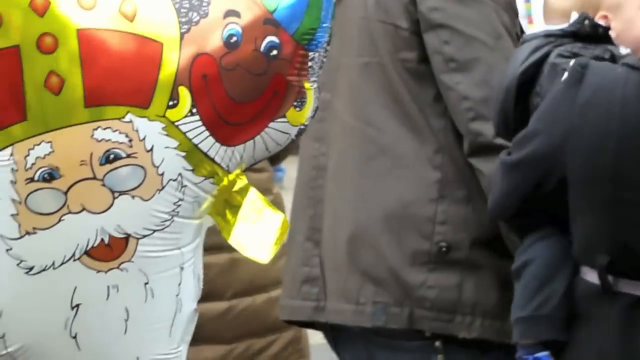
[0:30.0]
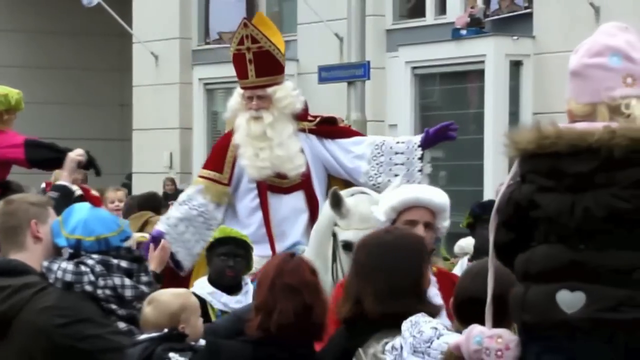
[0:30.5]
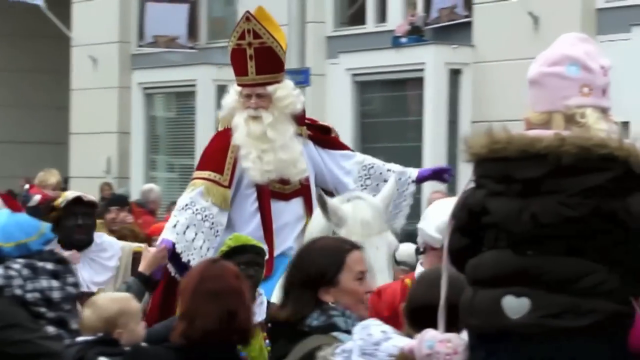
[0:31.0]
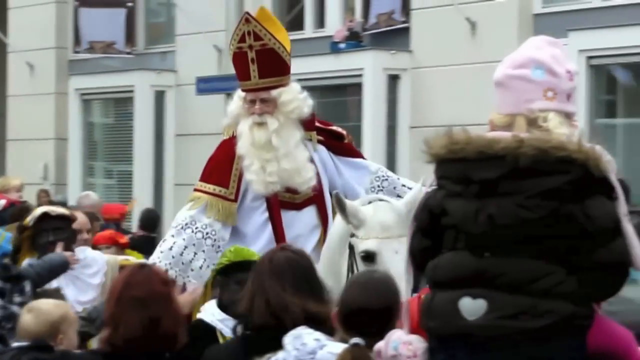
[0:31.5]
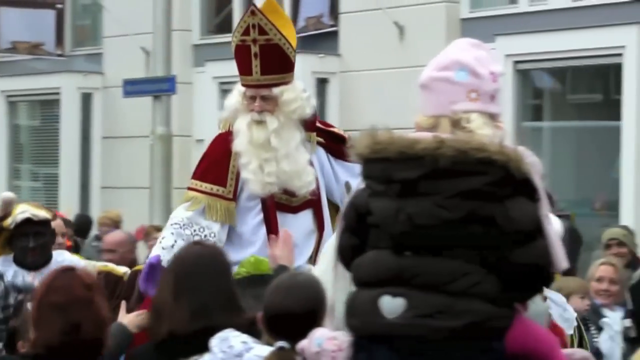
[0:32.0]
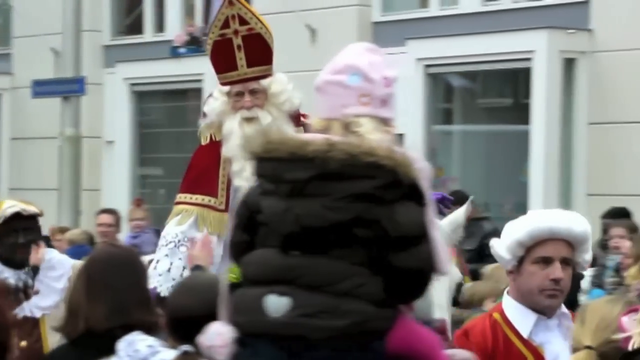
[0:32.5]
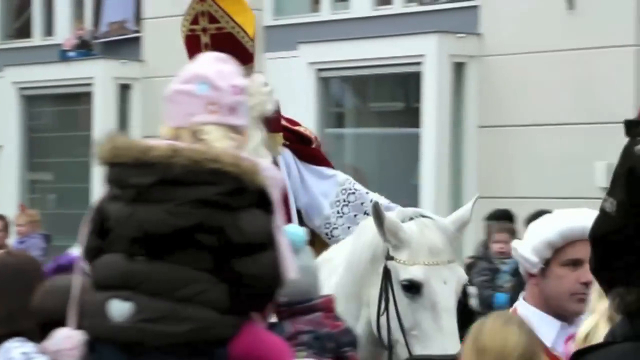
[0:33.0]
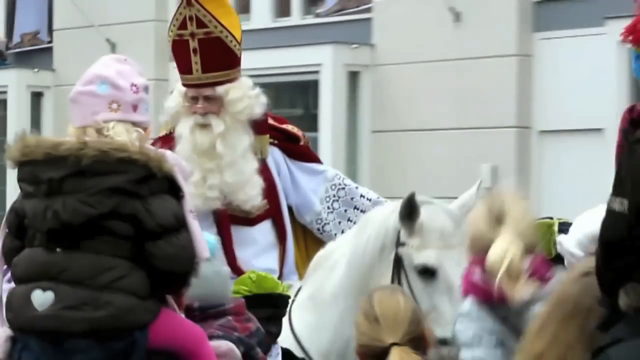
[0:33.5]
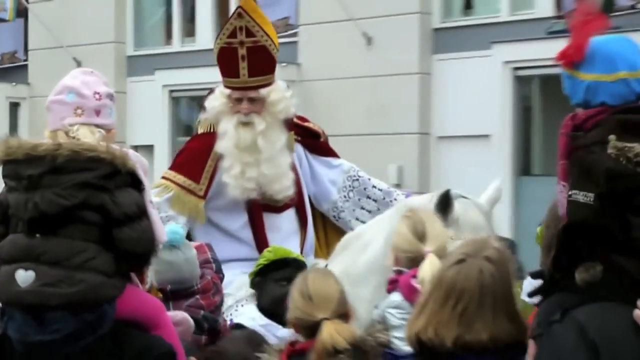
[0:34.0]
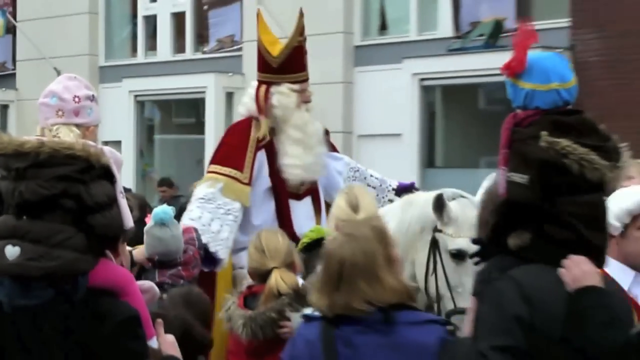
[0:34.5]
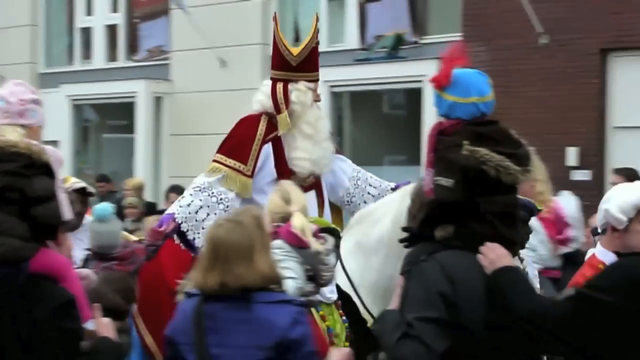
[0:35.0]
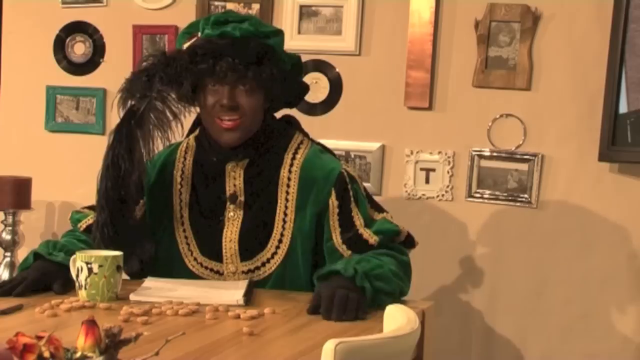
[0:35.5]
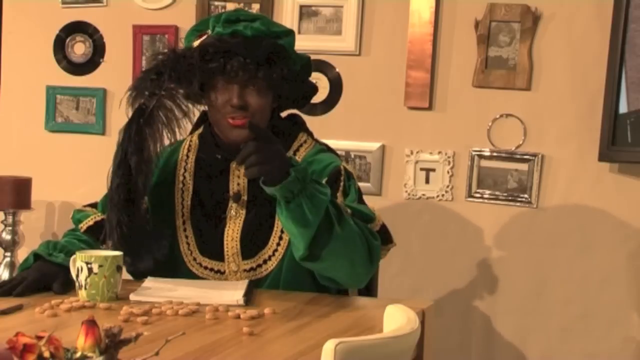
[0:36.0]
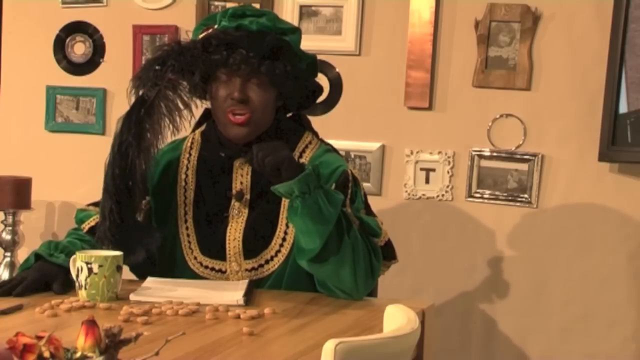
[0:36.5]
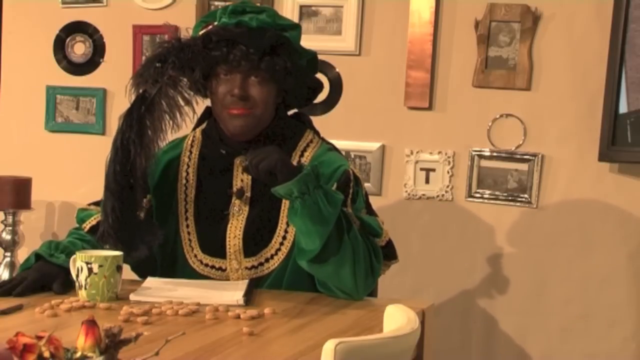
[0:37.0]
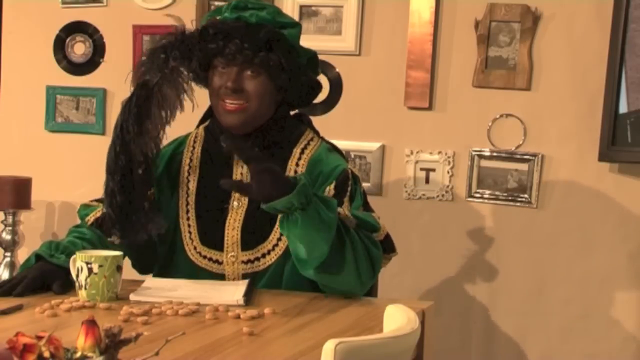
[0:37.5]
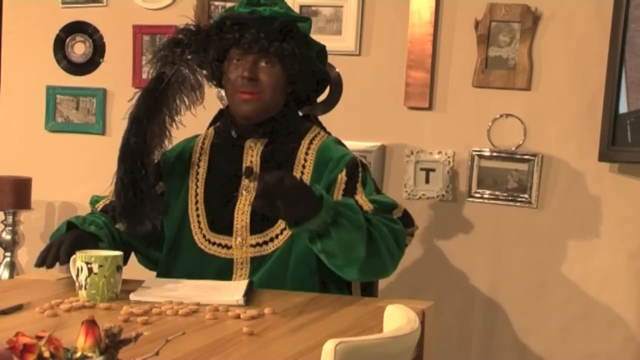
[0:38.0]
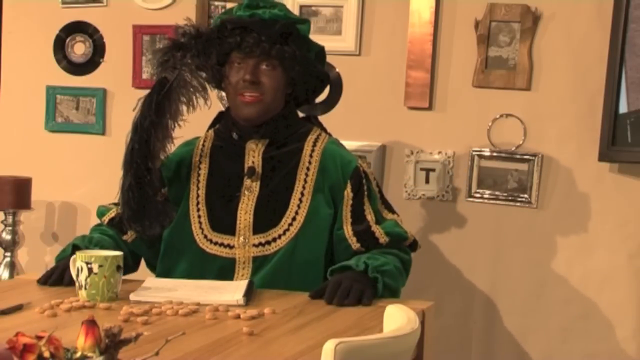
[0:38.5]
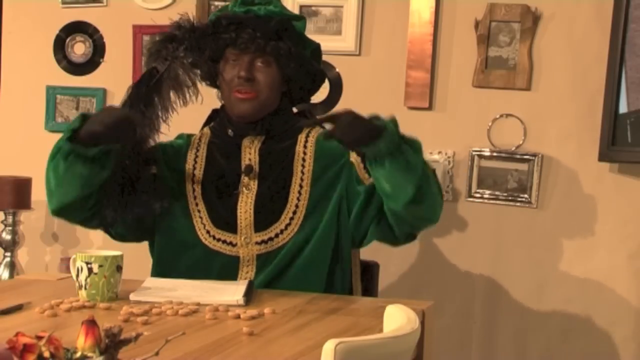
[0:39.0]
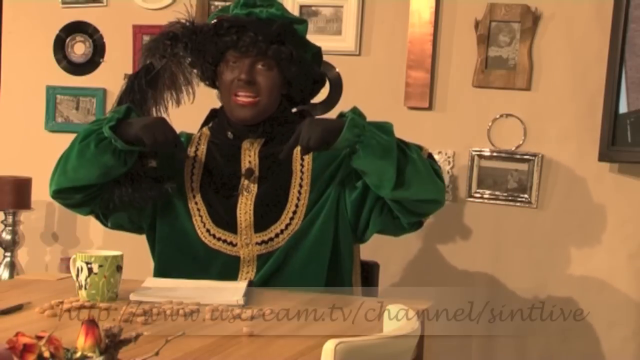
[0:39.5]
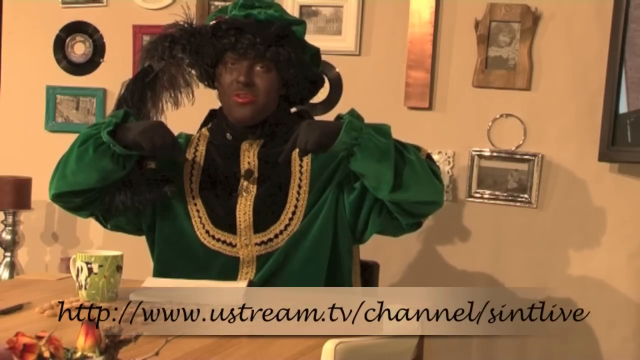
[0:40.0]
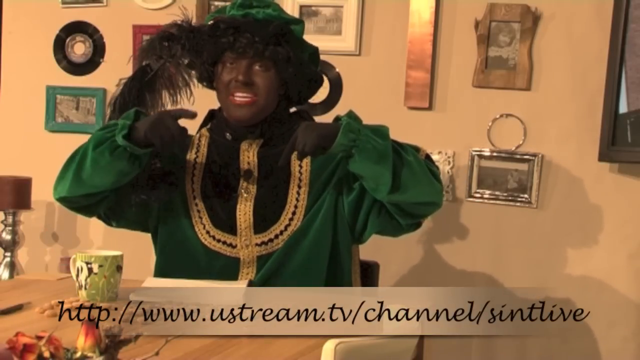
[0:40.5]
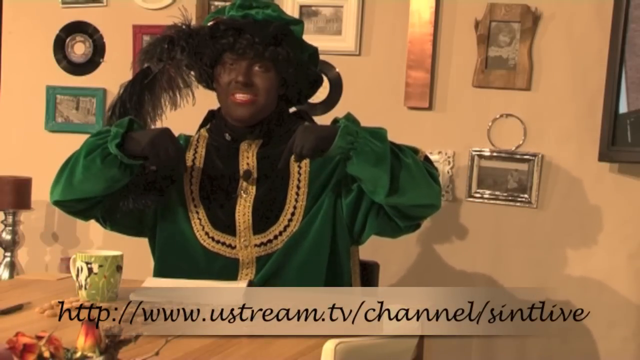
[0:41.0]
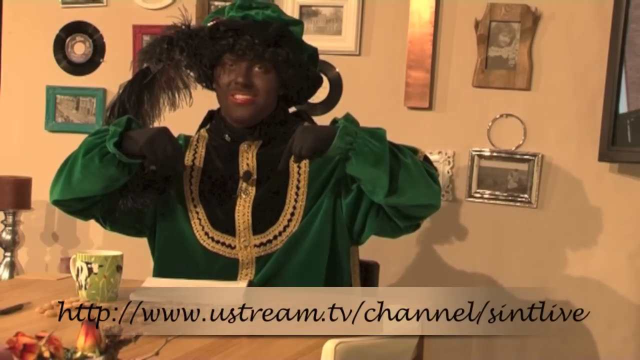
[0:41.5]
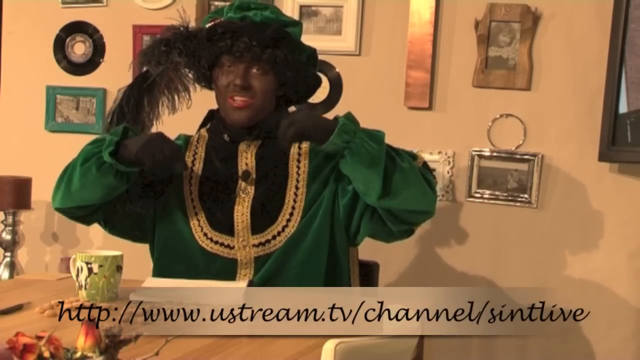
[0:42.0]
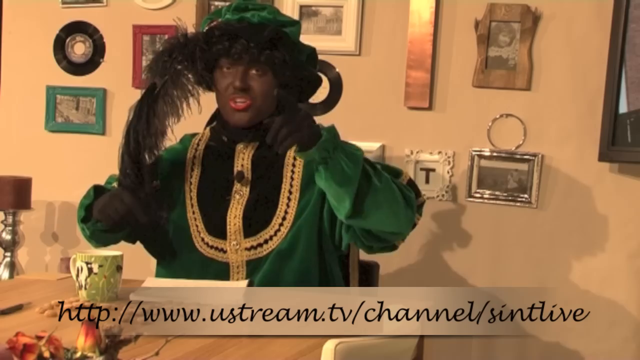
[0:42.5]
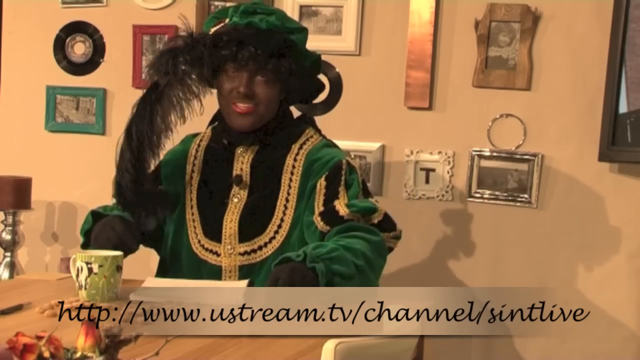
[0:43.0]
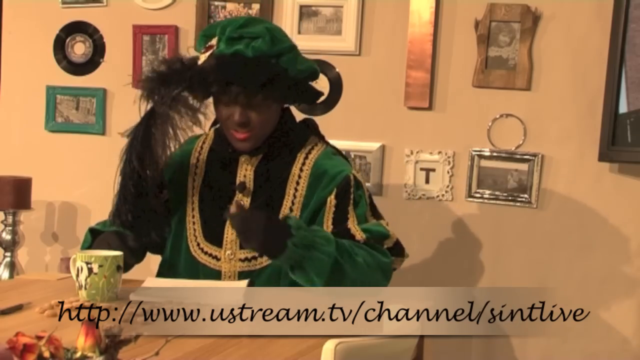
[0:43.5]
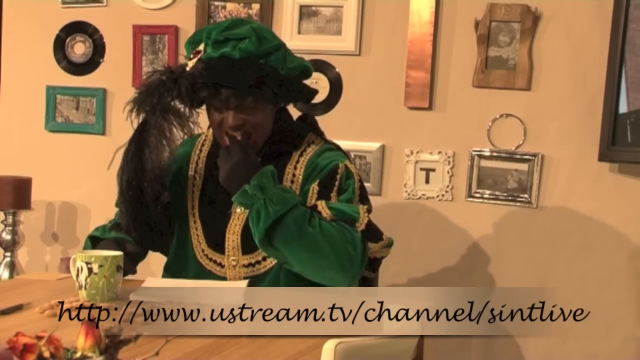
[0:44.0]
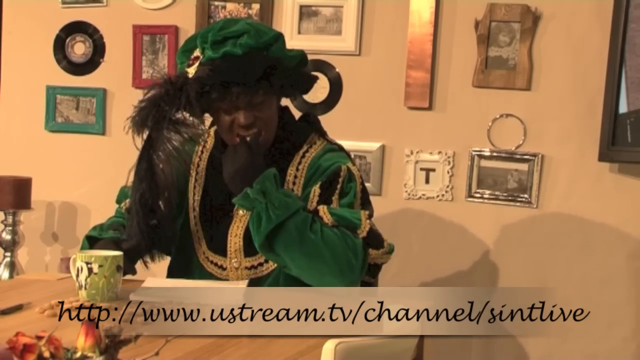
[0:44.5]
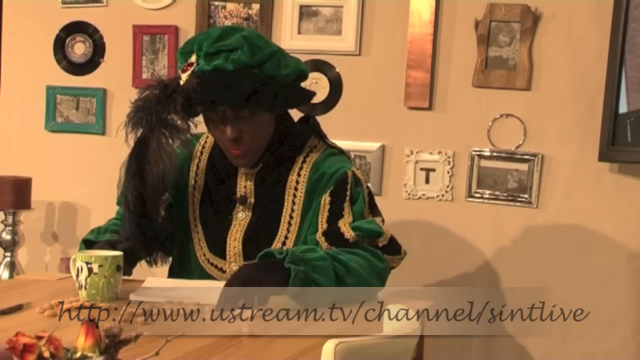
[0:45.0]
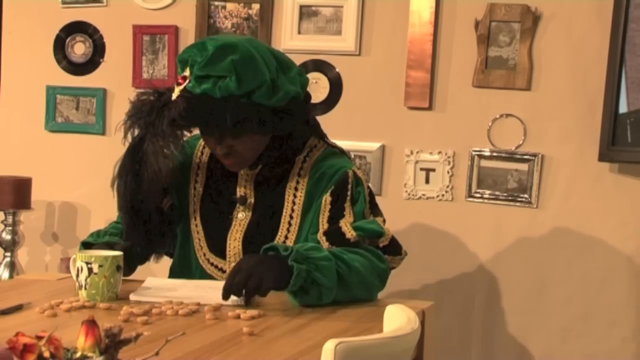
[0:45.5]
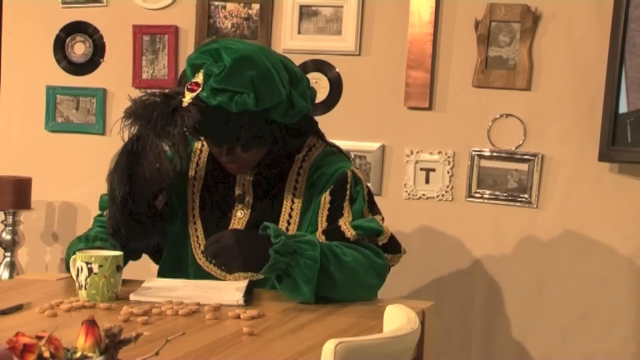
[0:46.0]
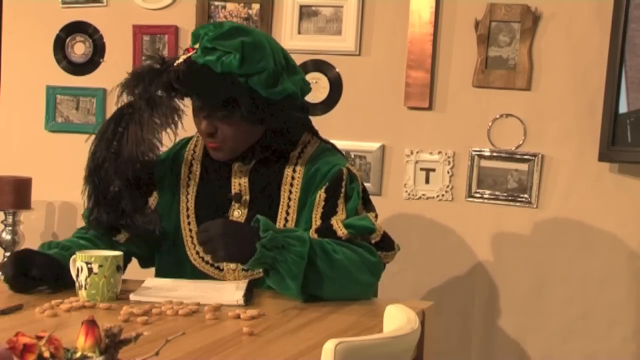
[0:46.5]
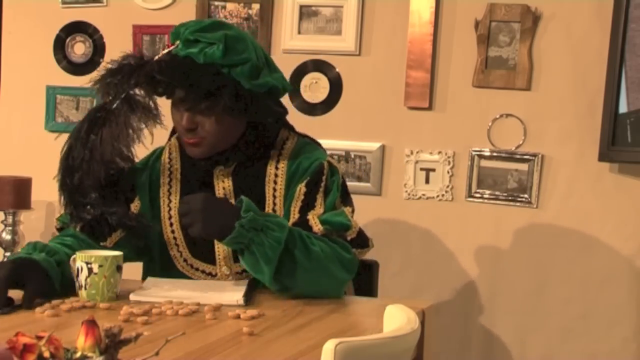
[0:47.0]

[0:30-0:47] The footage appears to be filmed from the side of the road, observing a parade. A row of people is in front of the camera, including a kid on someone's shoulders on the right, a shorter woman in the center, and another kid on someone's shoulders on the left. Through the center is a side view of Santa Claus riding a white horse toward the right. The scene then changes to a Black man sitting at a desk, talking to the camera in a medieval costume of green, black, and gold, with a green hat that has a black underside and a big feather off his right side that reaches down to about his mid-chest. He talks toward the camera, making hand gestures and pointing down toward the bottom, where there is a website that looks like "www.ustream.tv" followed by sub-channel divisions; he apparently encourages viewers to go to it. He then grabs an unidentifiable piece of food off the table with his left hand, puts it in his mouth, and starts eating it.